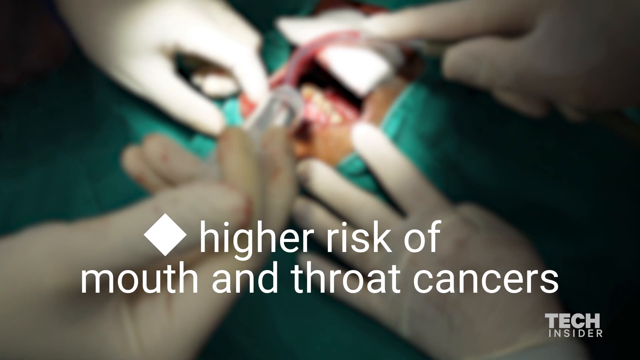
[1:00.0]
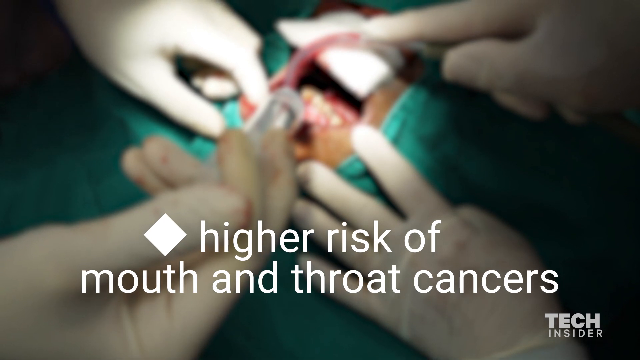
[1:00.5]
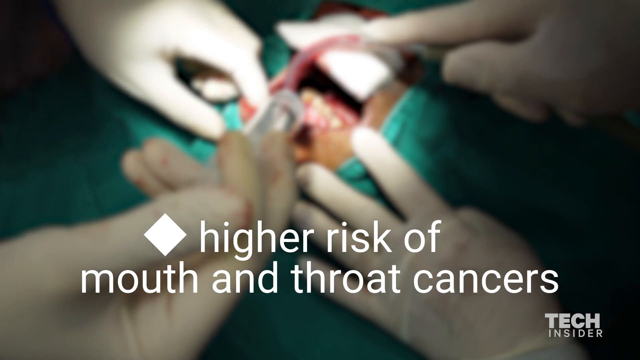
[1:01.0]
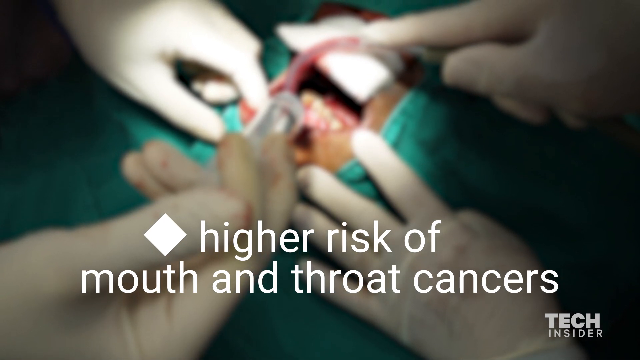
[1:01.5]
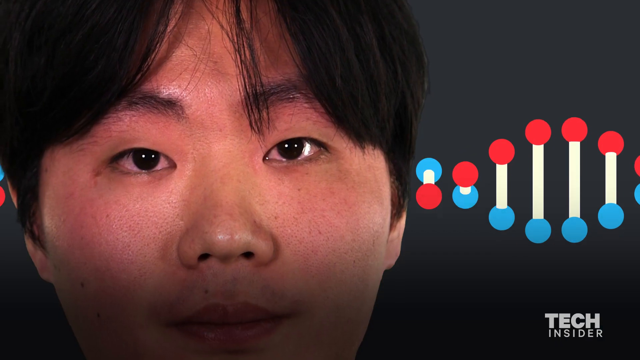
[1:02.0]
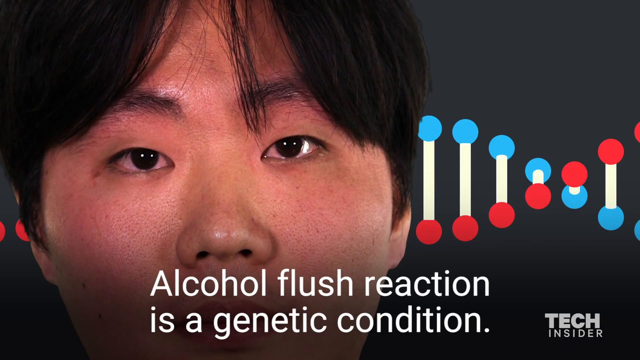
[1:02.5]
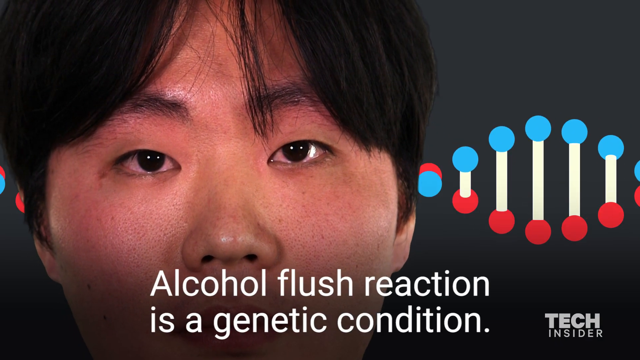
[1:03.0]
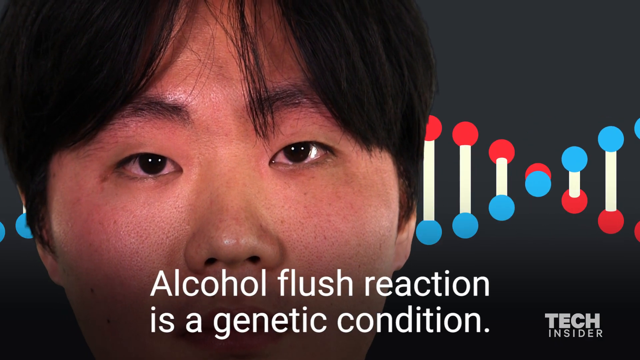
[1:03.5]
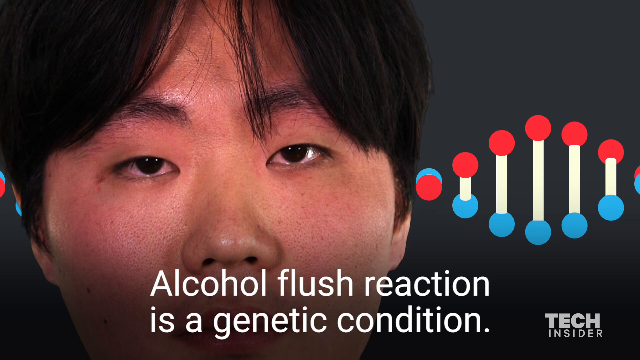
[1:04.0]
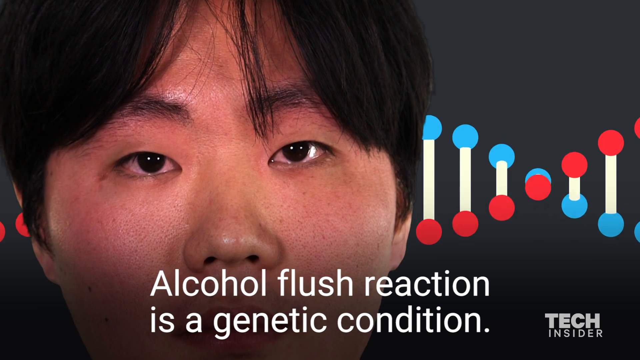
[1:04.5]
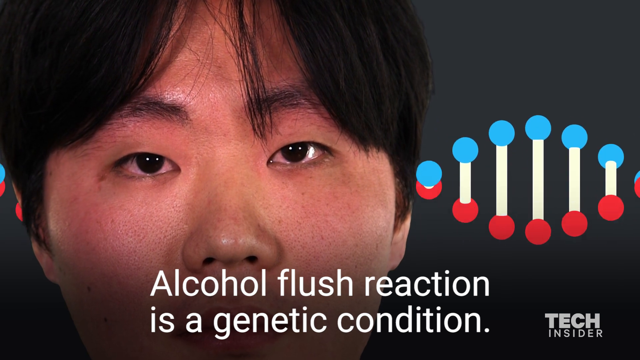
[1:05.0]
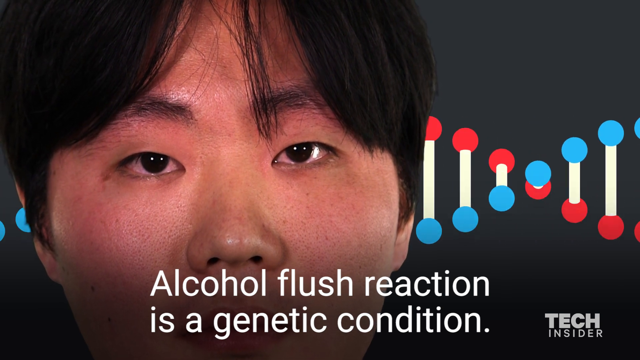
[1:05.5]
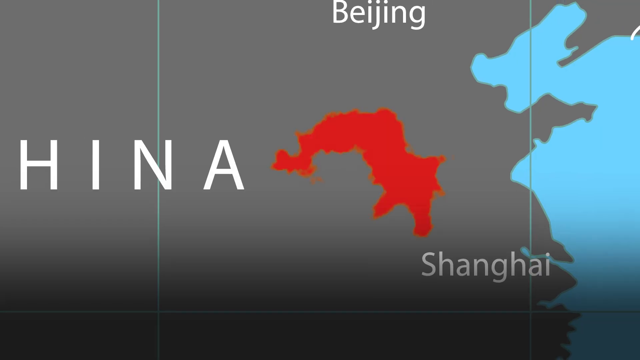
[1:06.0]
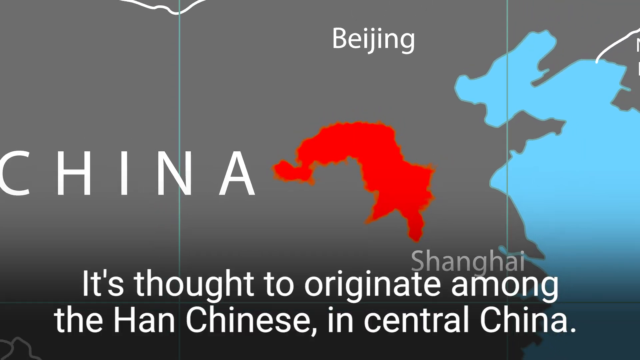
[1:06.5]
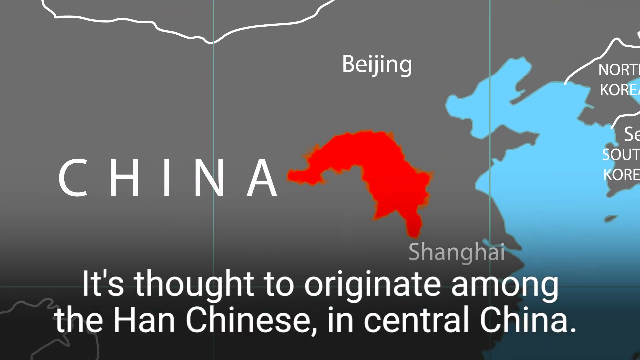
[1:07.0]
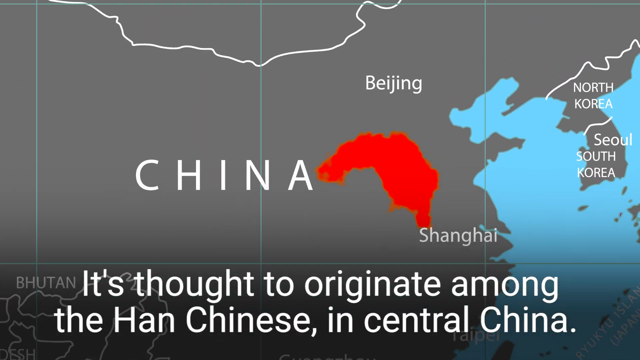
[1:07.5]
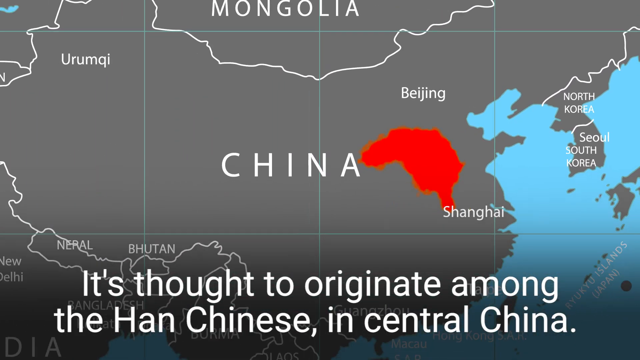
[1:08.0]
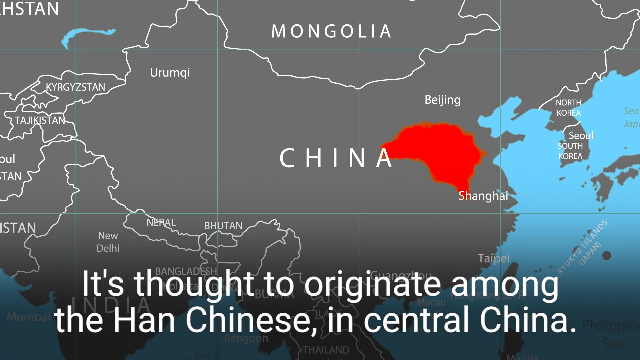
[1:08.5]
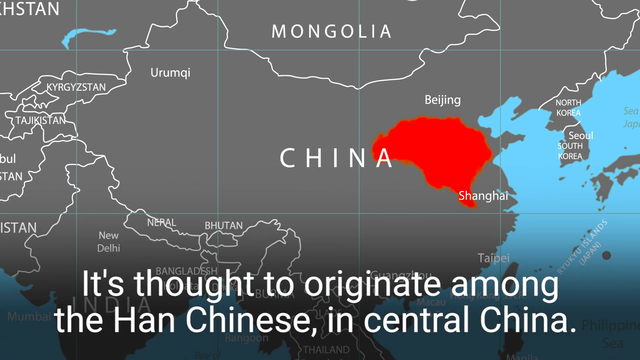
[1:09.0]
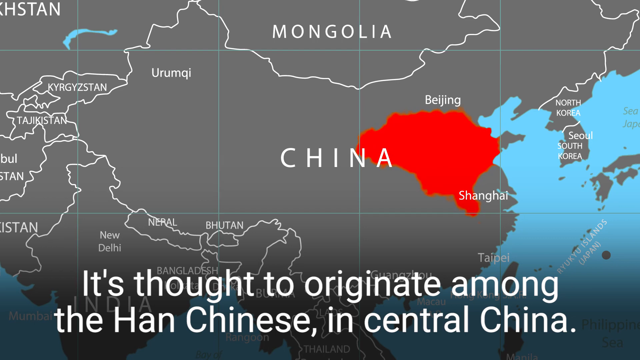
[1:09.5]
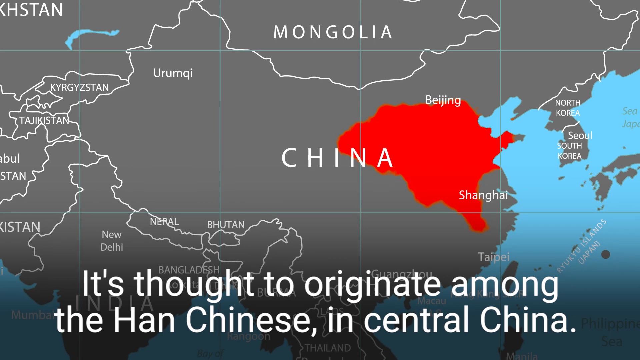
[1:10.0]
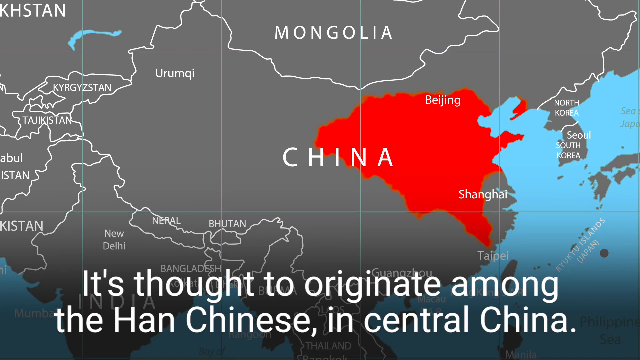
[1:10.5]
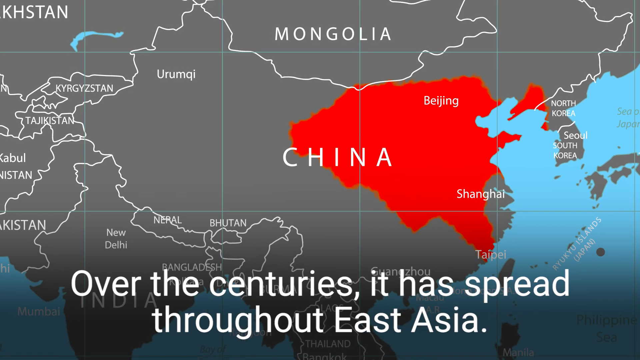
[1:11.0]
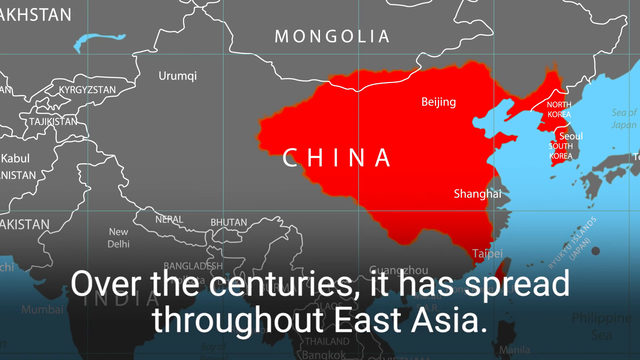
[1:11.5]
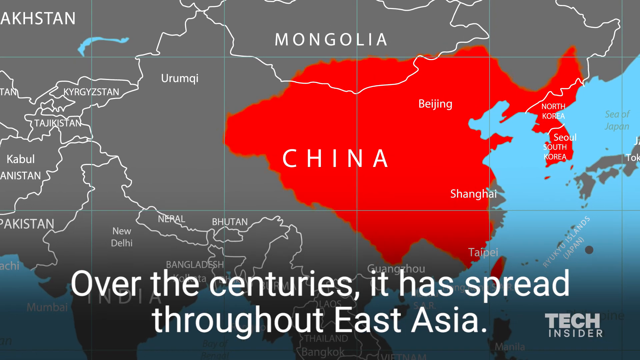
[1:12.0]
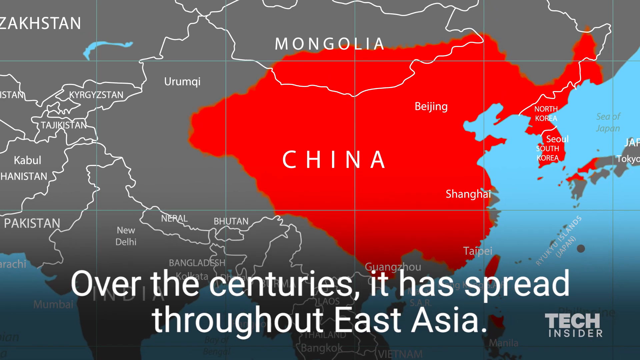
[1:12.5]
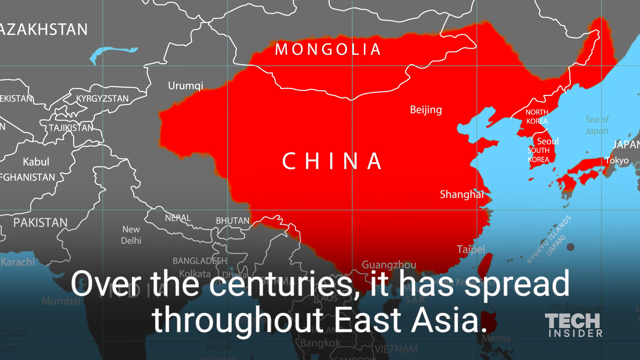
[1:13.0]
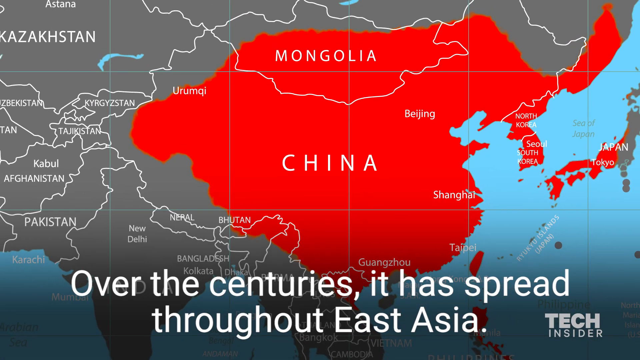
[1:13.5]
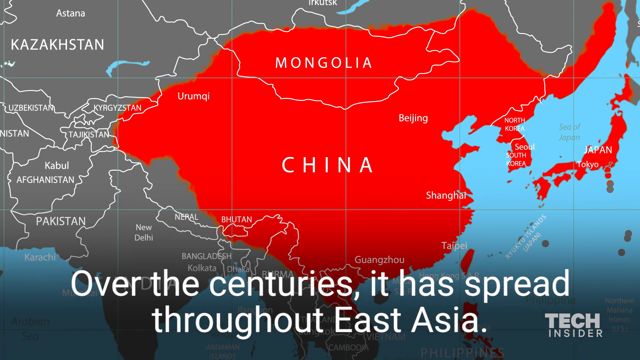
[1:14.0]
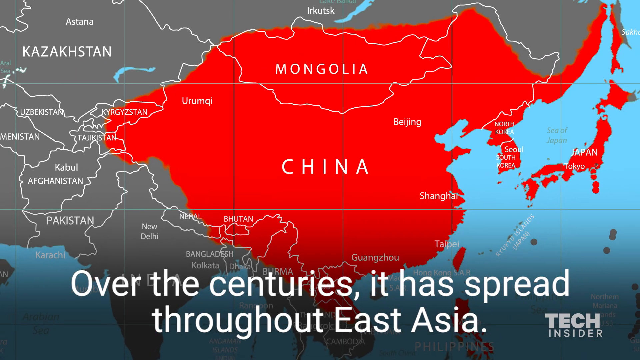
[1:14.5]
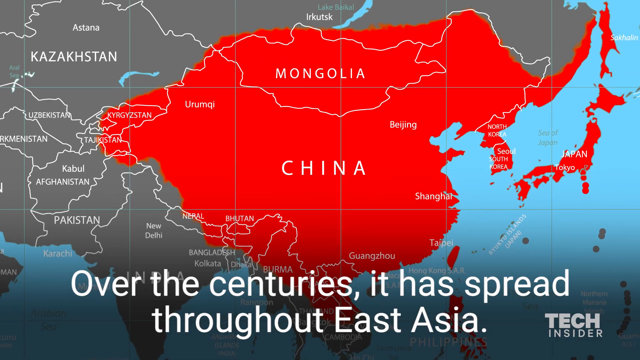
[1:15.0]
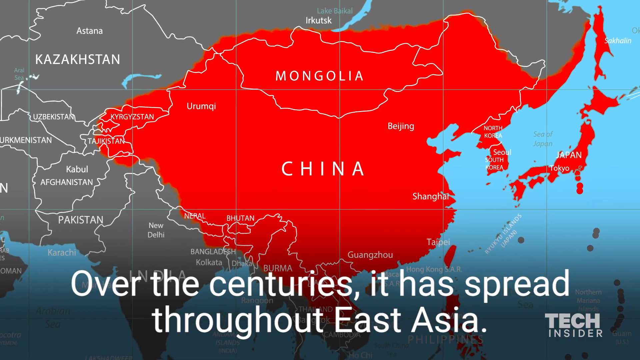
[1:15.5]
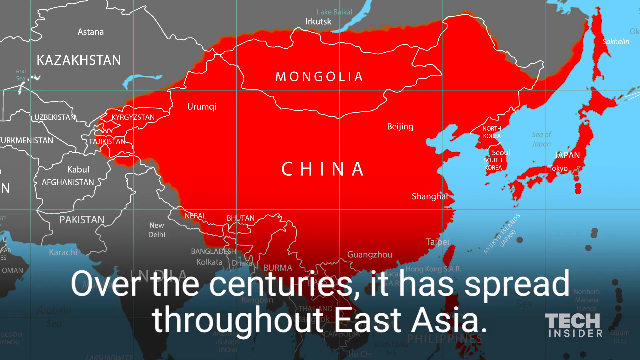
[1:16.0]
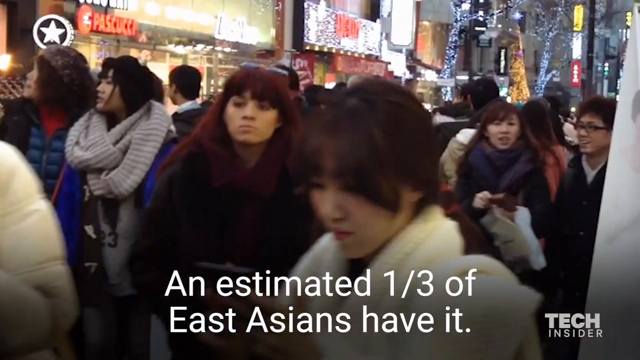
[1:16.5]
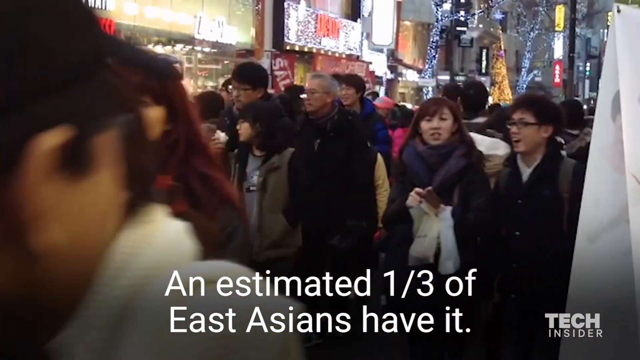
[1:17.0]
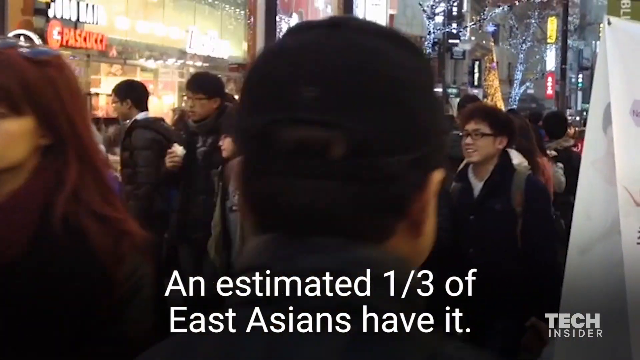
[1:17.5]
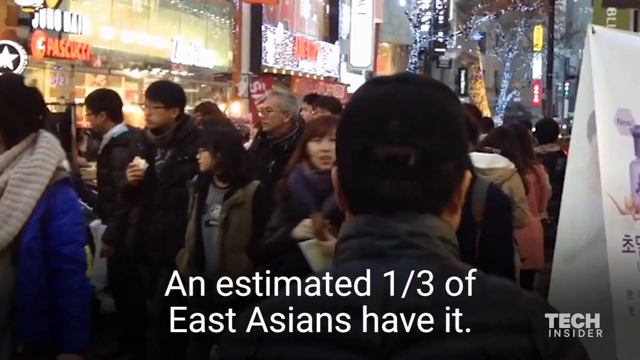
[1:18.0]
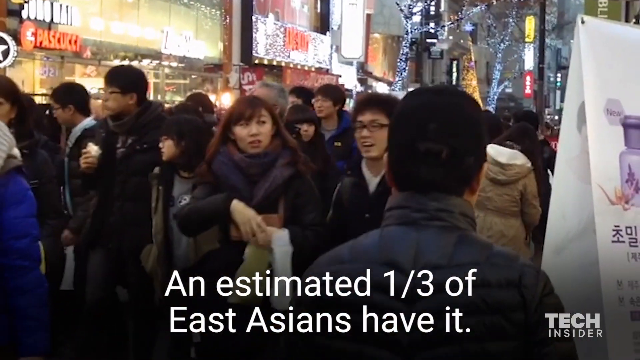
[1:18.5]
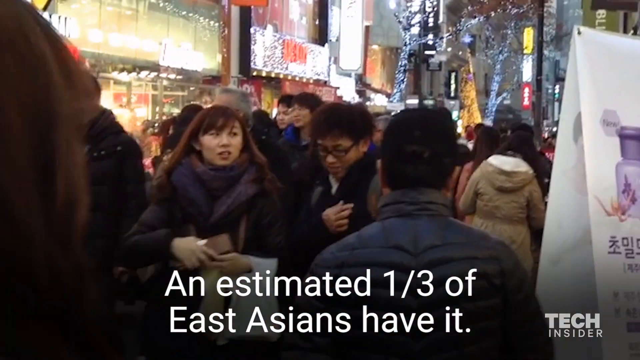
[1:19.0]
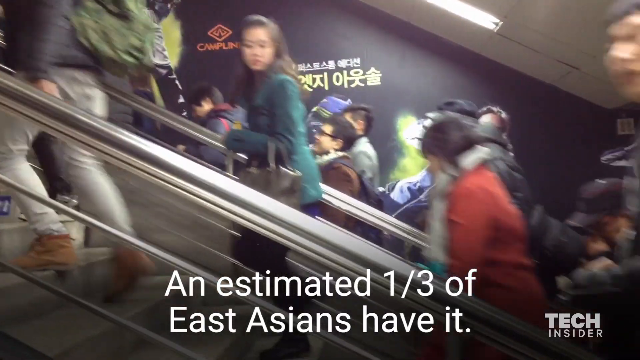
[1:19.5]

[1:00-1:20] An extreme close-up shows the face of an Asian man: his forehead, eyebrows, nose and the top part of his mouth. He is to the left of centre, taking up two-thirds of the screen. The background is black, and white text across the bottom reads "alcohol flush reaction is a genetic condition". Behind the man's head and to the right of the screen is a blue, white and red diagram that seems to represent DNA, with vertical white lines that have blue circles on one end and red on the other, rotating. A map of China follows, with part of China between Beijing and Shanghai illuminated in a bright orange-red colour; Beijing and Shanghai are marked. White text across the bottom reads "it's thought to originate among the Han Chinese in central China". The camera zooms out from the map, showing ocean to the right as well as North Korea and South Korea, with Seoul also marked. The camera continues to zoom out until surrounding countries such as Mongolia, Bhutan and Nepal are visible, and the red patch begins to grow, filling most of China. The text across the bottom reads "over the centuries it has spread throughout East Asia". The red colour then exceeds the boundaries of China, filling North Korea, South Korea, part of Japan and a large part of Mongolia, and continues to spread to the south as well. On the next screen the text reads "an estimated one-third of East Asians have it", superimposed over footage of a very busy city street at night, possibly in China, with numerous people walking around dressed for cold weather. Then a shot shows an escalator running from the lower right of the screen to the upper left, with people walking up it.